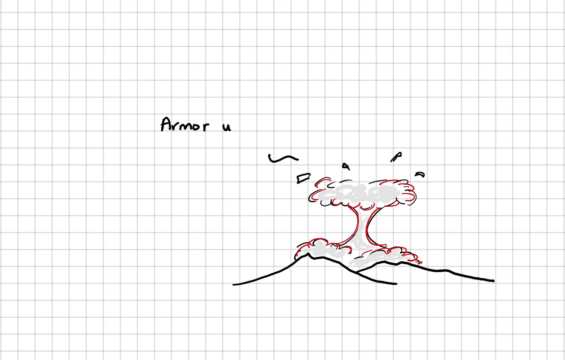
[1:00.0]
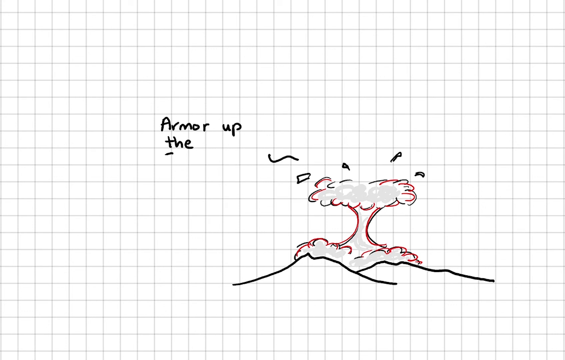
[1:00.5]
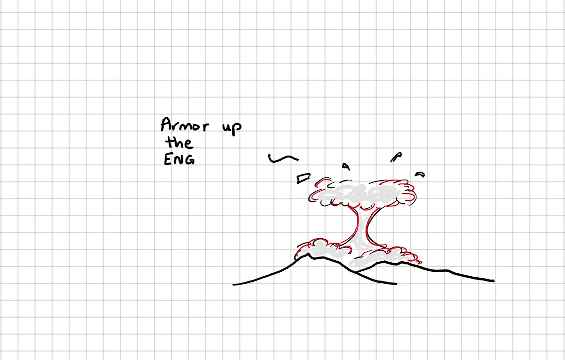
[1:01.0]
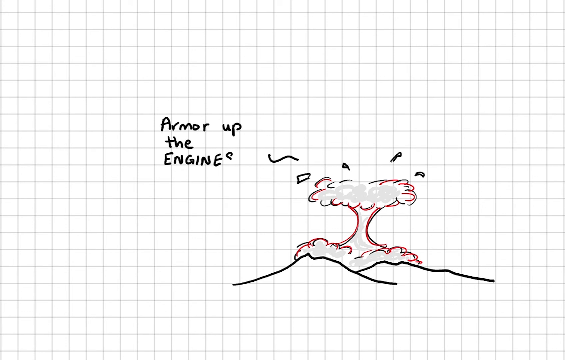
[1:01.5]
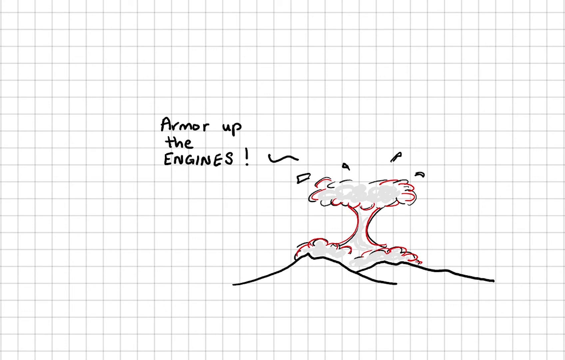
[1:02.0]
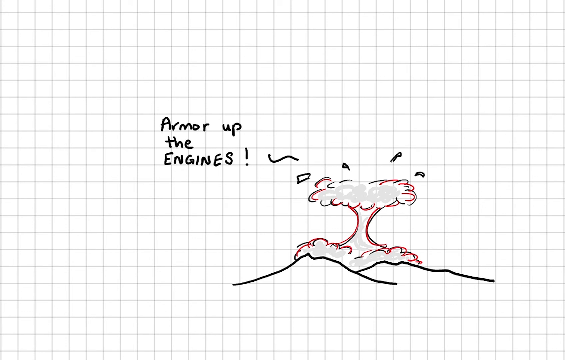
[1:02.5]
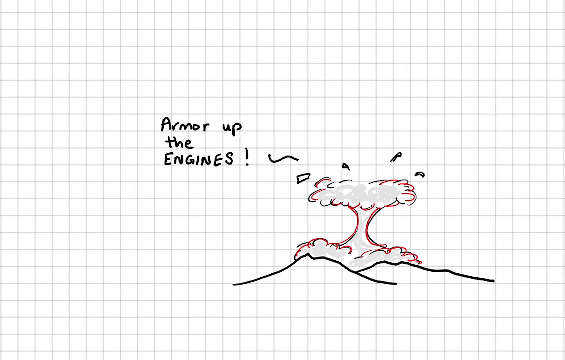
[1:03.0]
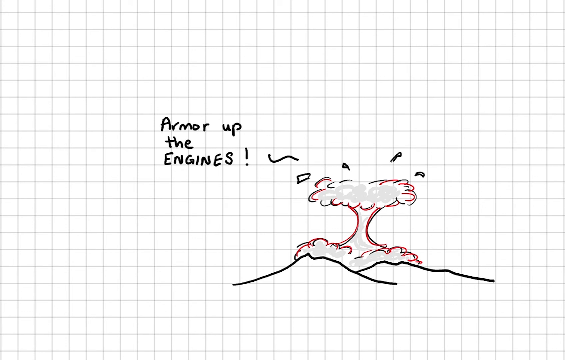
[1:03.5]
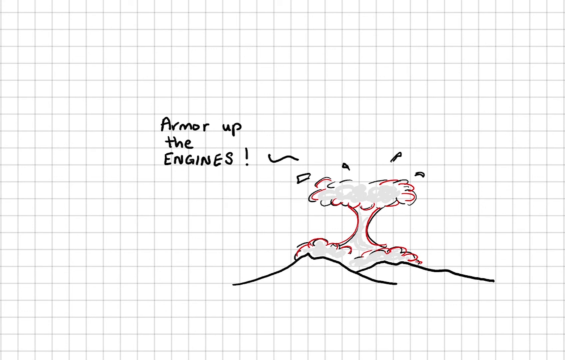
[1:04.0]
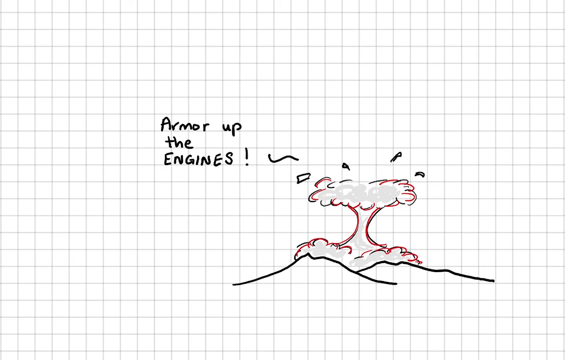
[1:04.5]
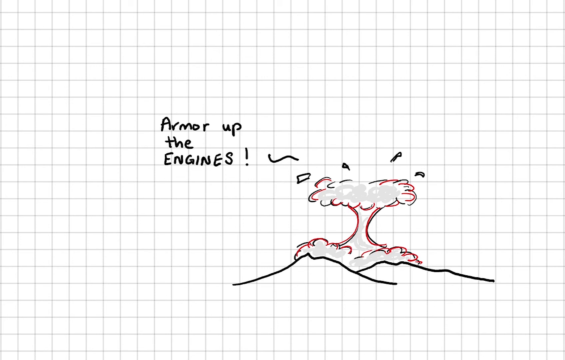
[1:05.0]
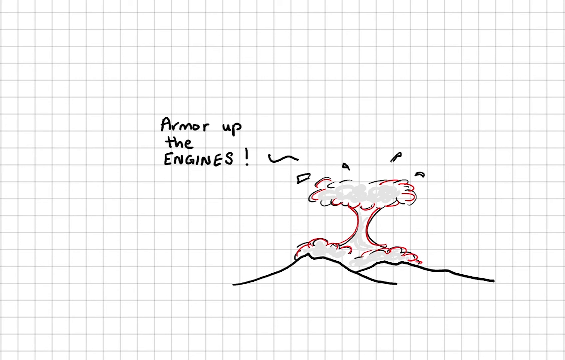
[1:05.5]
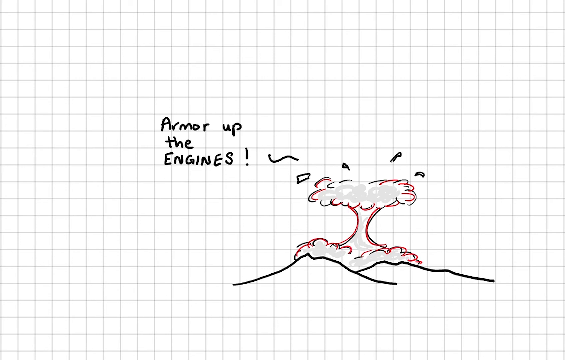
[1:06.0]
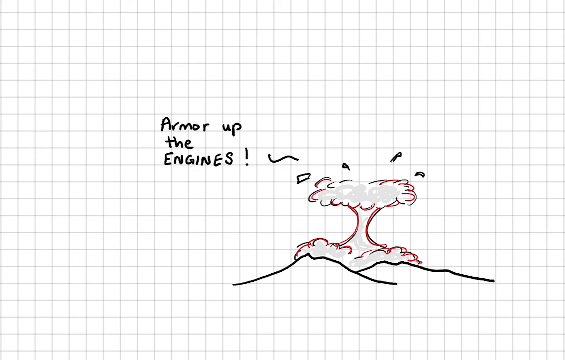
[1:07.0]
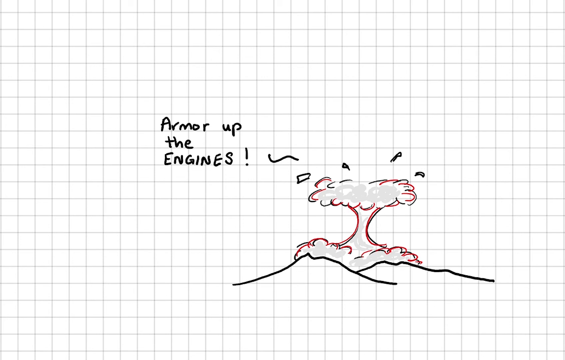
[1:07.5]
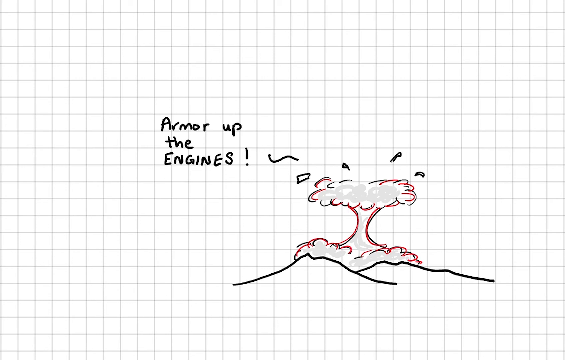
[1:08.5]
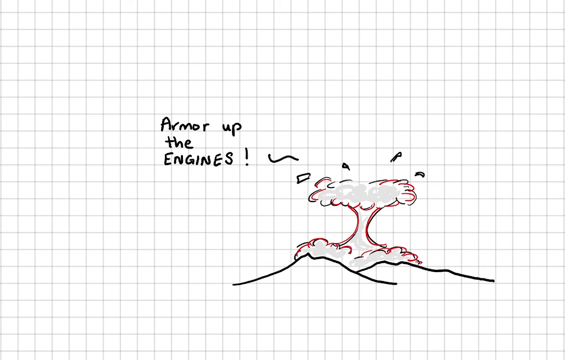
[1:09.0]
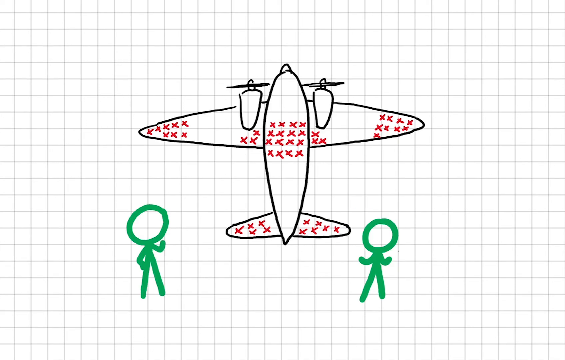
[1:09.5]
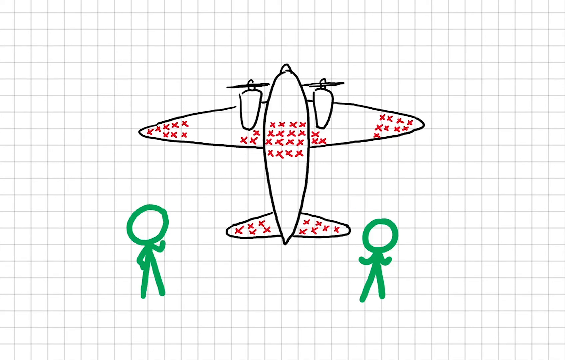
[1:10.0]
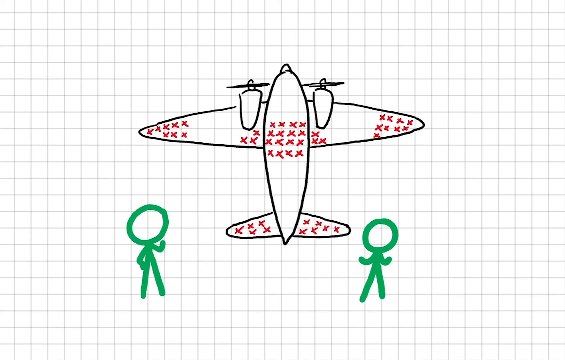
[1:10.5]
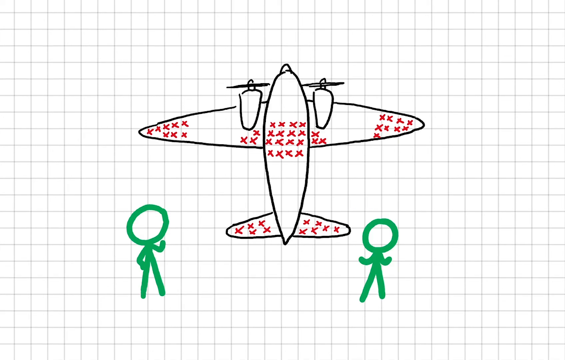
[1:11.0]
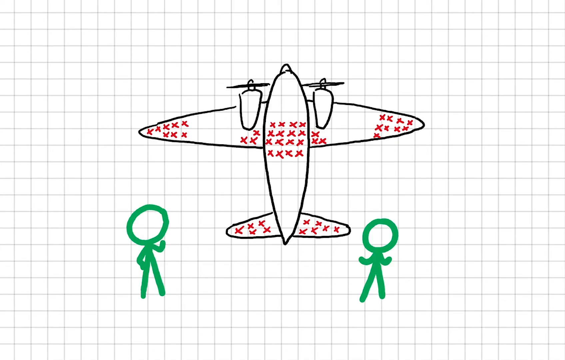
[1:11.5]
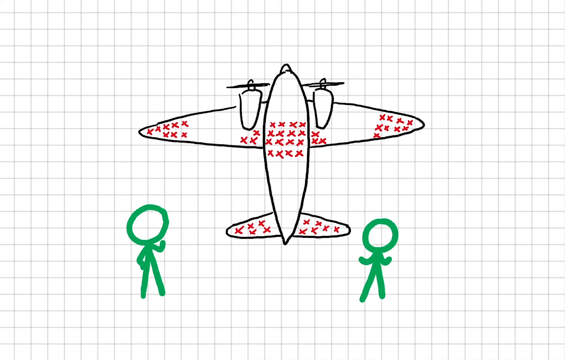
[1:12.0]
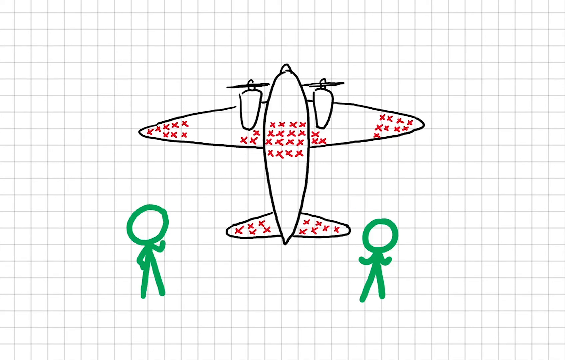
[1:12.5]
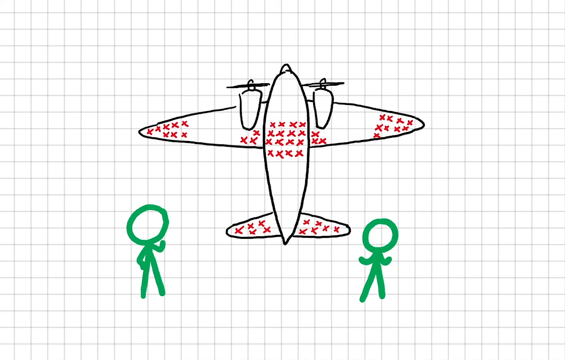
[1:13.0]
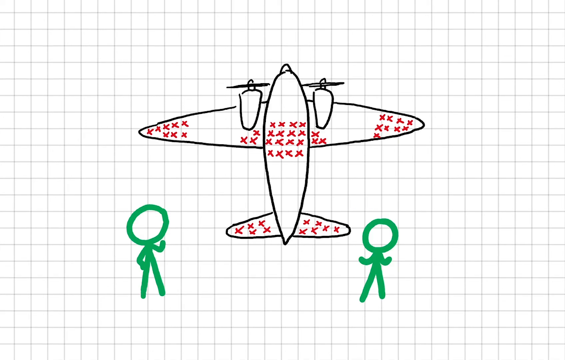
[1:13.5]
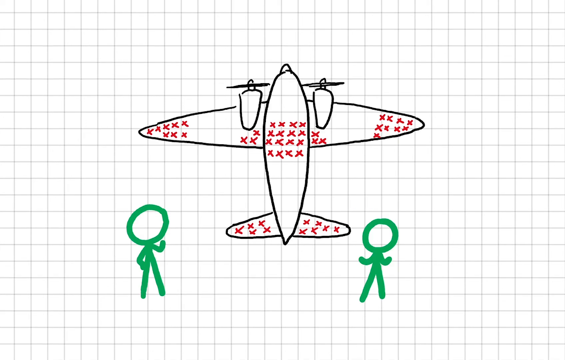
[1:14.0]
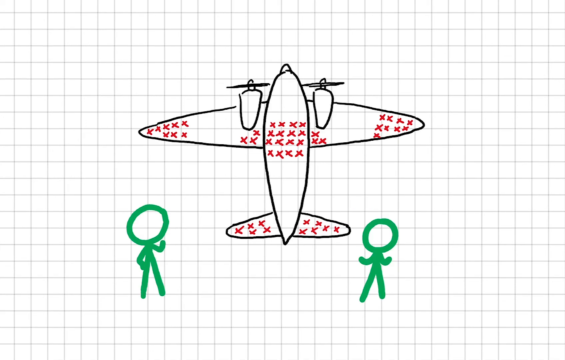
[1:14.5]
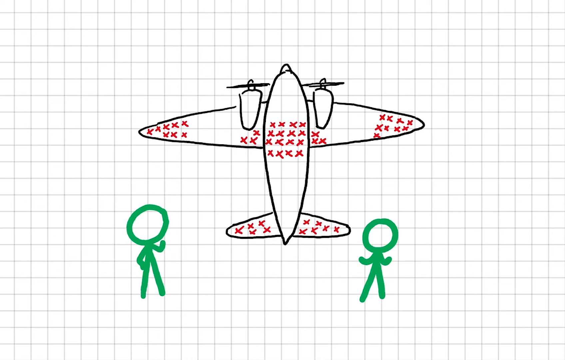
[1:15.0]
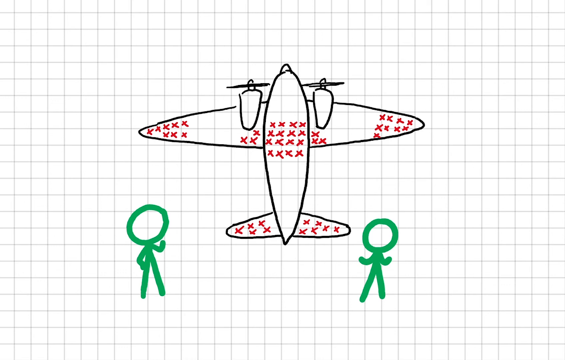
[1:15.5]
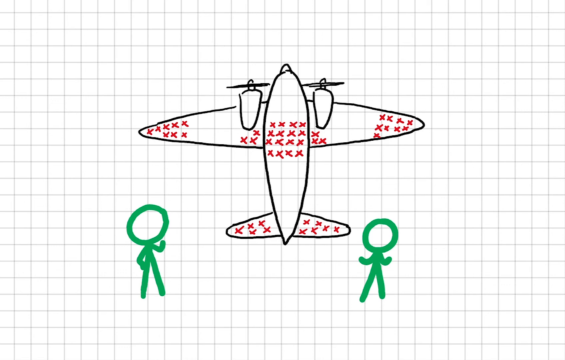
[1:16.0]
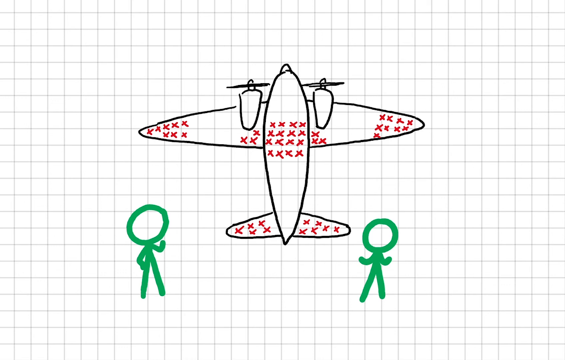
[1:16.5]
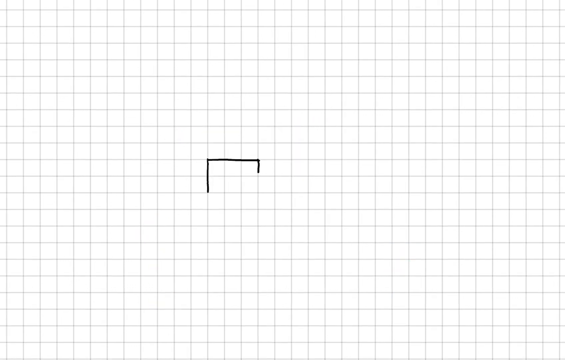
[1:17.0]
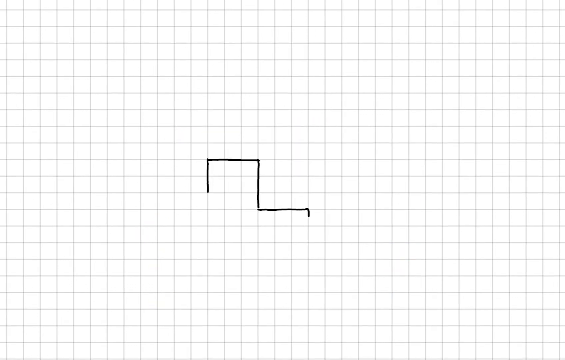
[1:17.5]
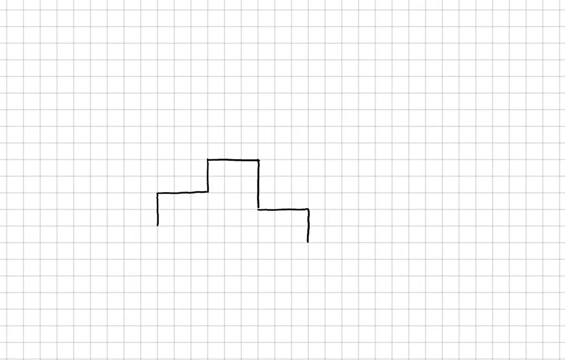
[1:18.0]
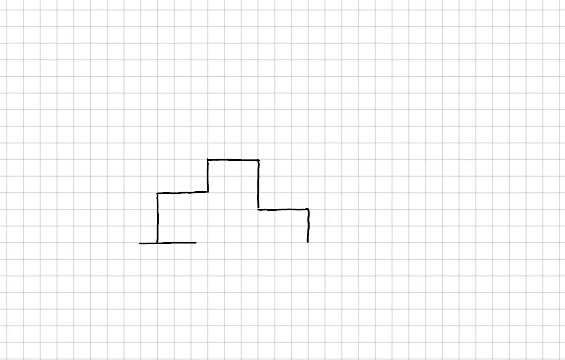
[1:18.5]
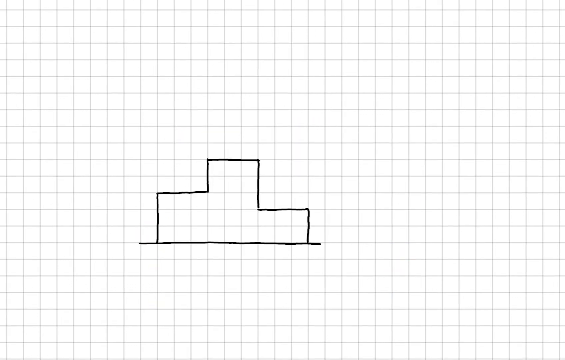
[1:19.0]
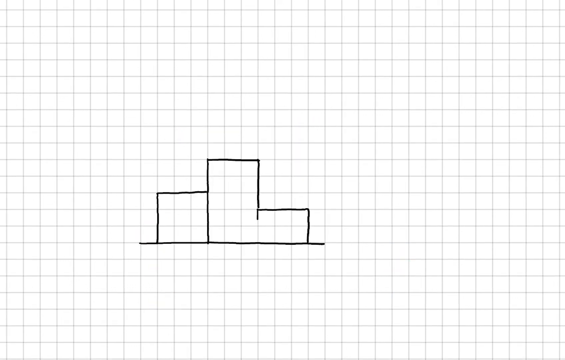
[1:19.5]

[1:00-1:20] An illustrated mountaintop is shown, with the plane visibly crashing into the mountain, what looks like a rupture, and smoke coming from where the plane crashed. A few words appear in black text, first "armor", then "armor up their engines". An exclamation mark appears as a character shouts. The scene returns to the two stickman characters and the illustrated plane with the bullet holes, then cuts to a blank screen where an illustration of what looks like three blocks appears, and the video ends abruptly.